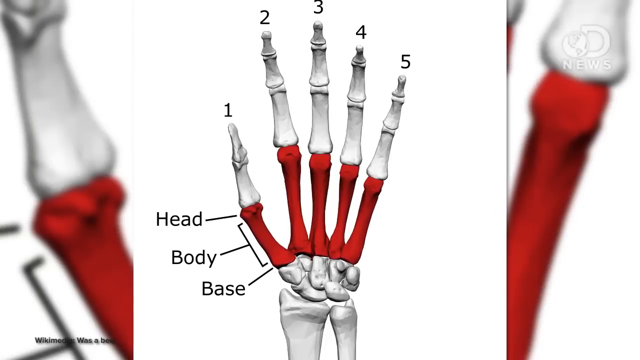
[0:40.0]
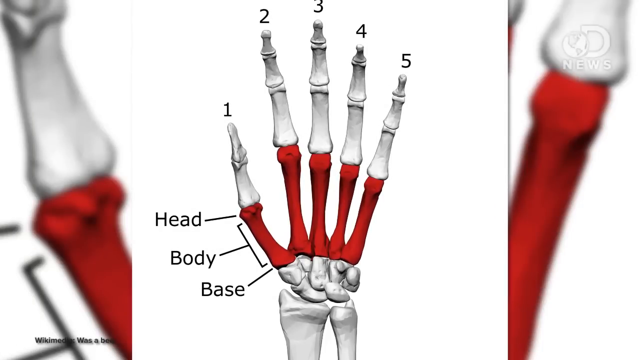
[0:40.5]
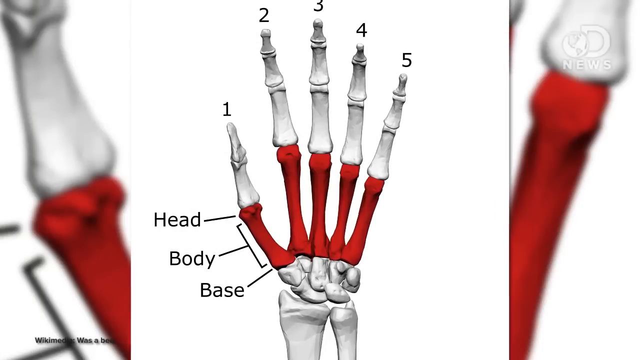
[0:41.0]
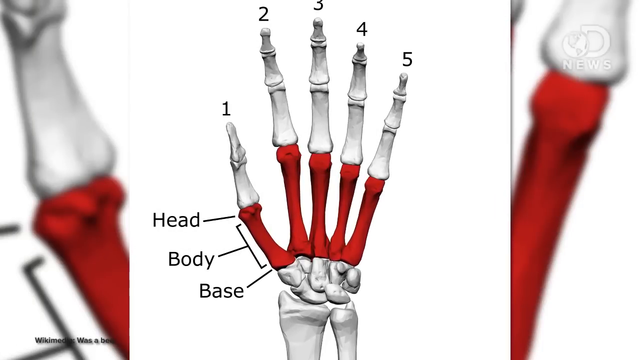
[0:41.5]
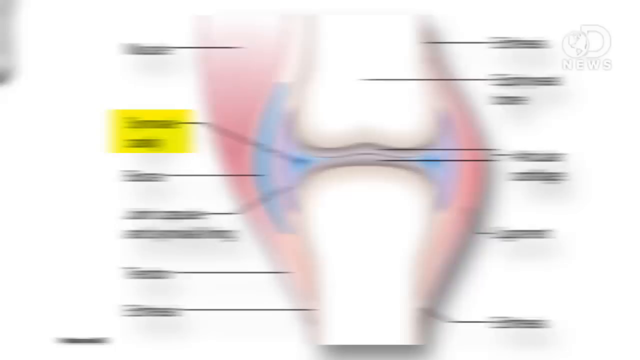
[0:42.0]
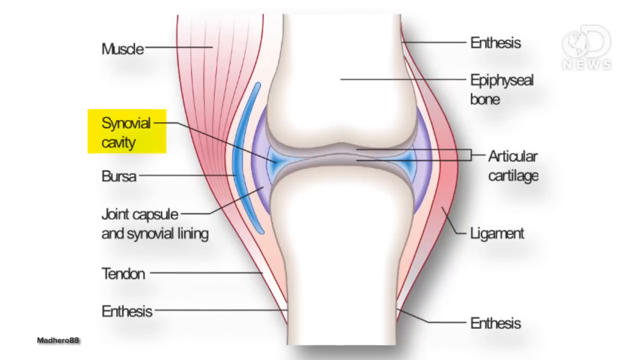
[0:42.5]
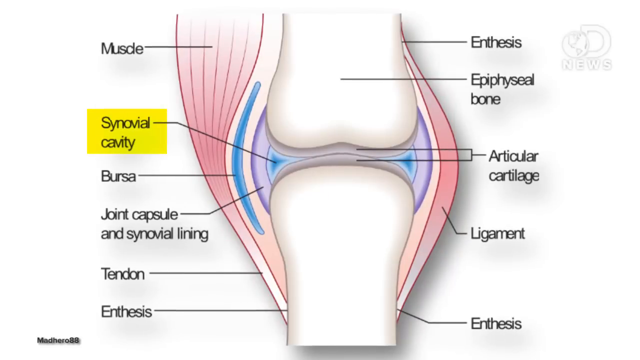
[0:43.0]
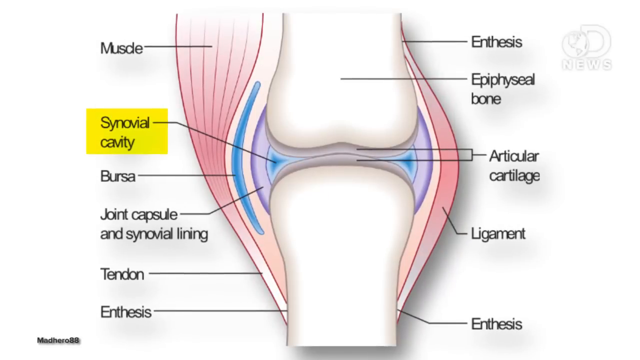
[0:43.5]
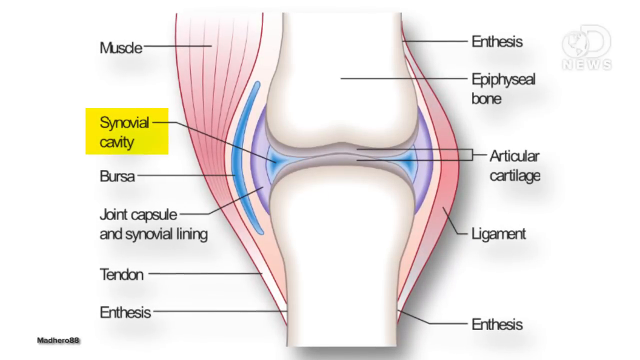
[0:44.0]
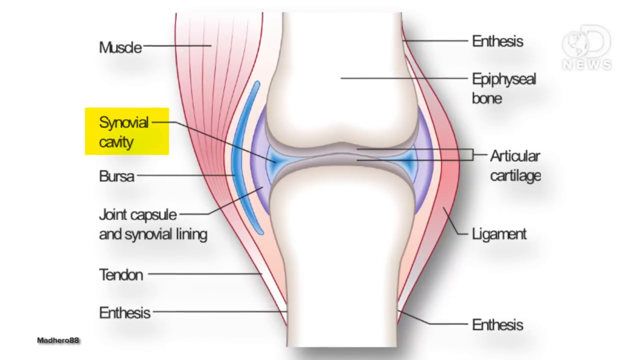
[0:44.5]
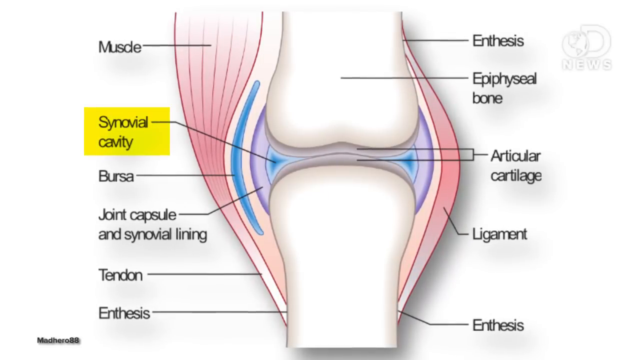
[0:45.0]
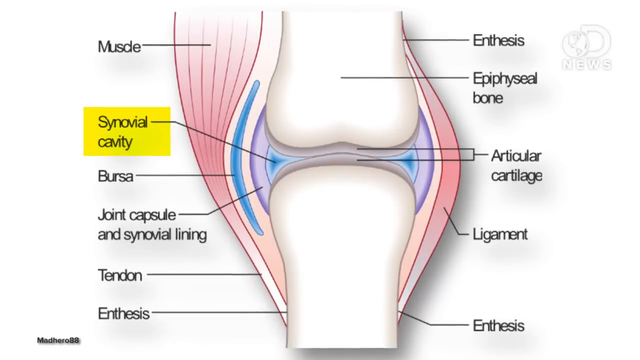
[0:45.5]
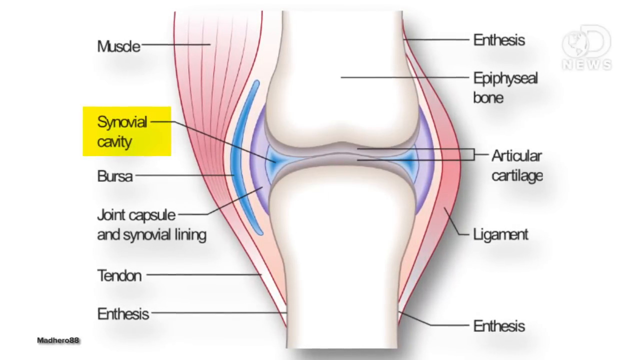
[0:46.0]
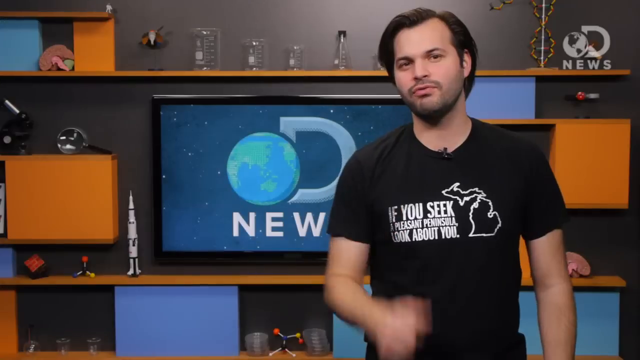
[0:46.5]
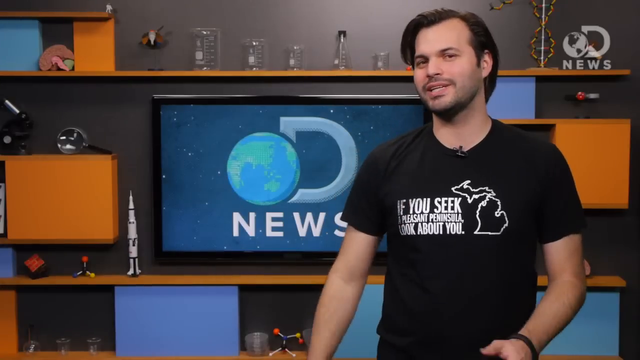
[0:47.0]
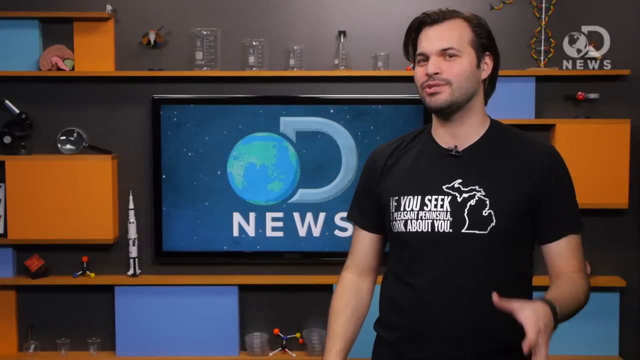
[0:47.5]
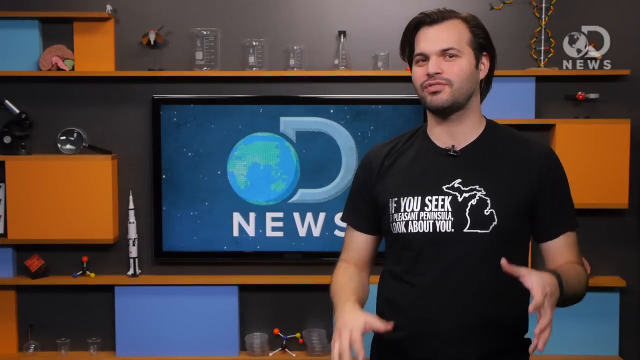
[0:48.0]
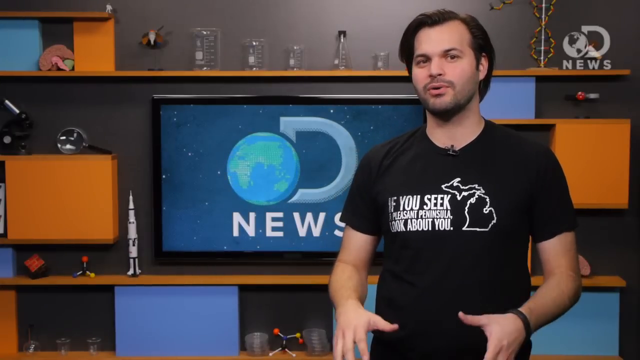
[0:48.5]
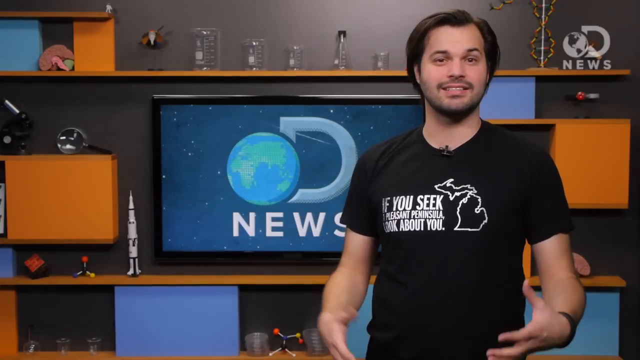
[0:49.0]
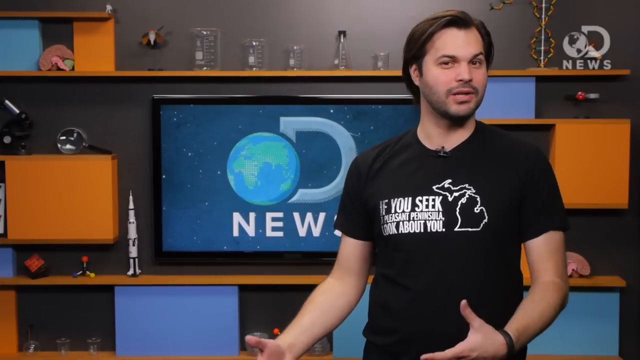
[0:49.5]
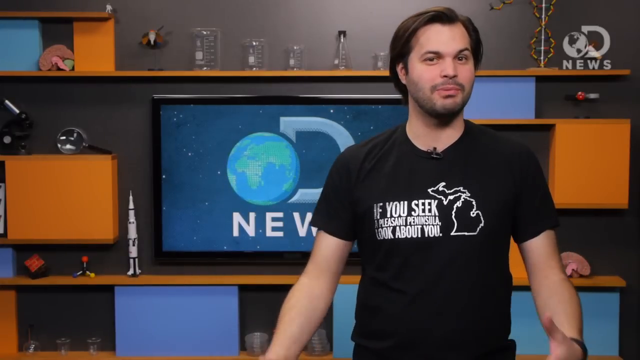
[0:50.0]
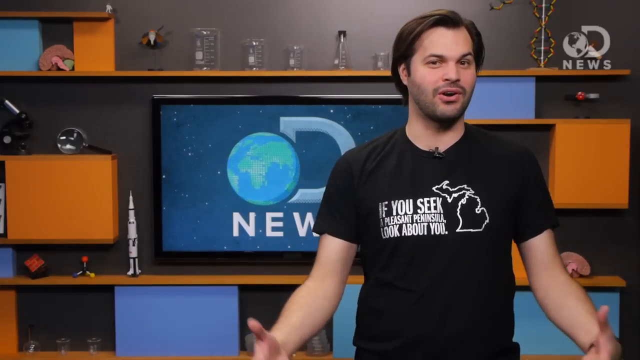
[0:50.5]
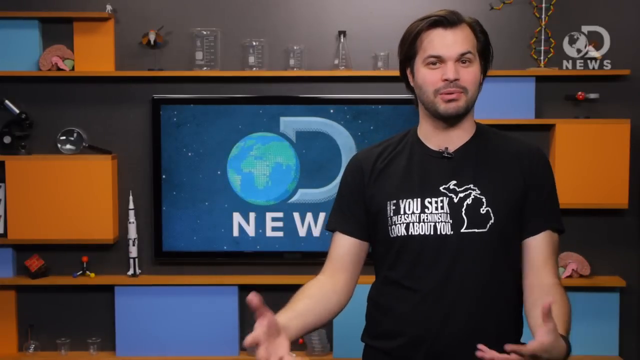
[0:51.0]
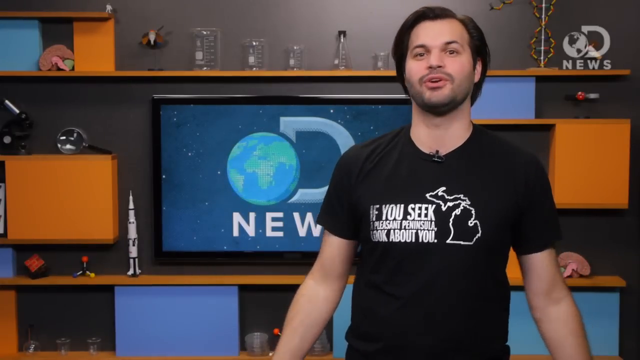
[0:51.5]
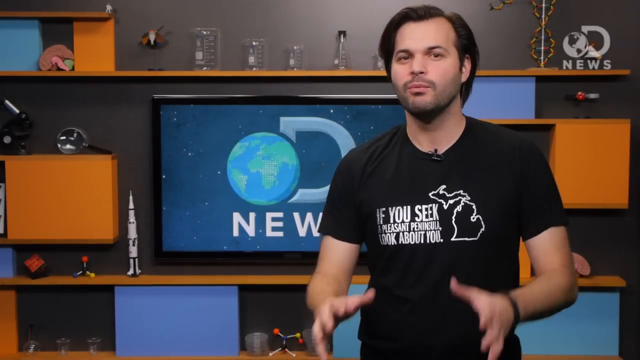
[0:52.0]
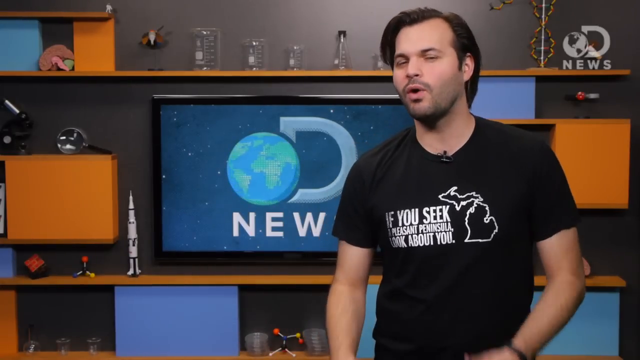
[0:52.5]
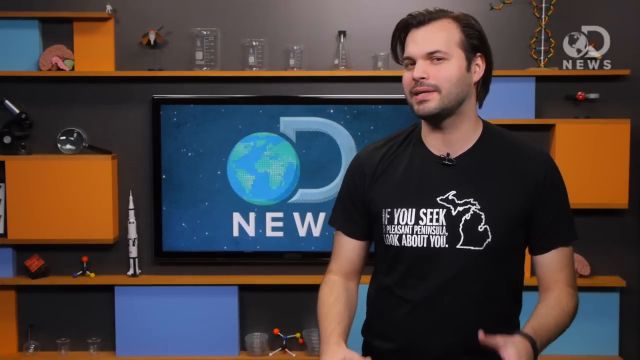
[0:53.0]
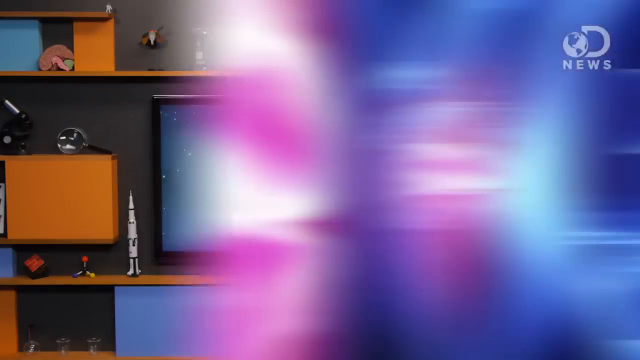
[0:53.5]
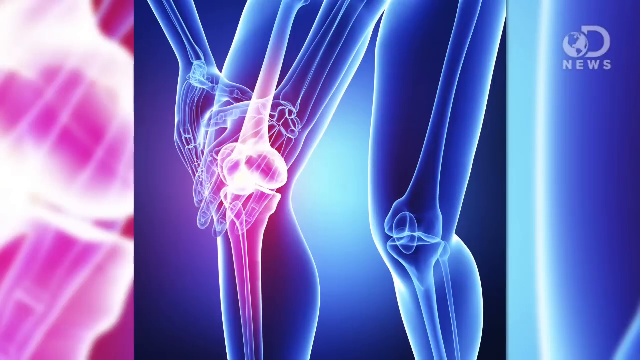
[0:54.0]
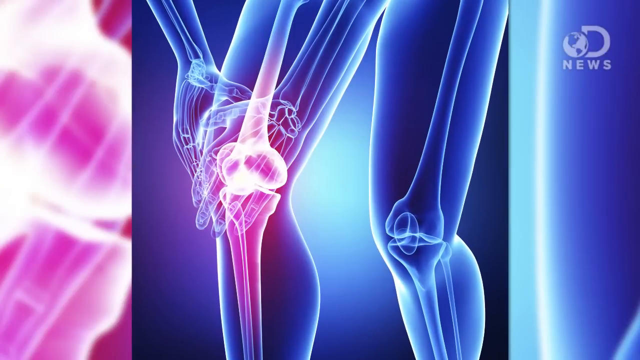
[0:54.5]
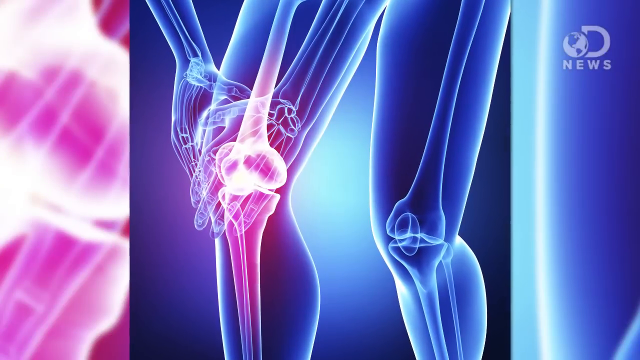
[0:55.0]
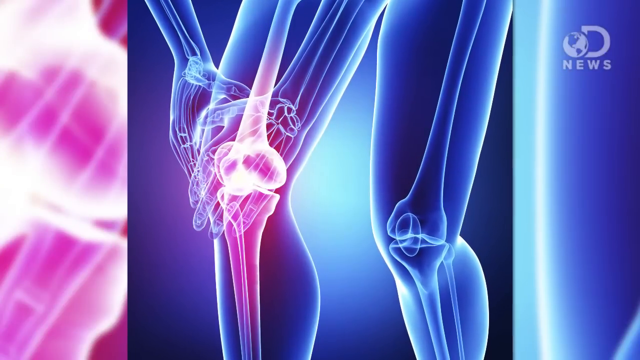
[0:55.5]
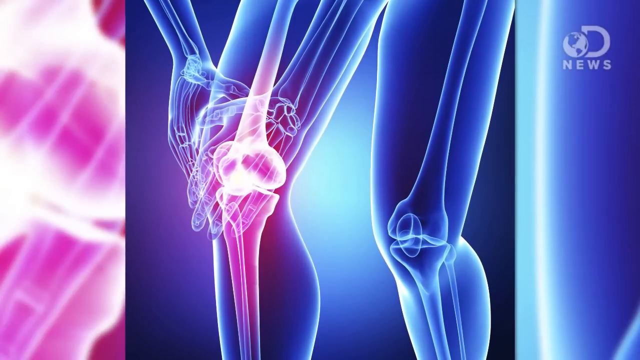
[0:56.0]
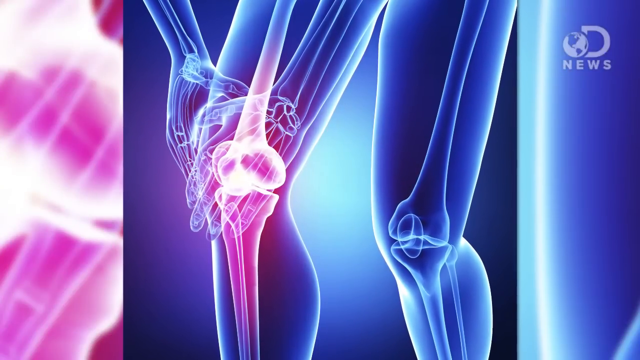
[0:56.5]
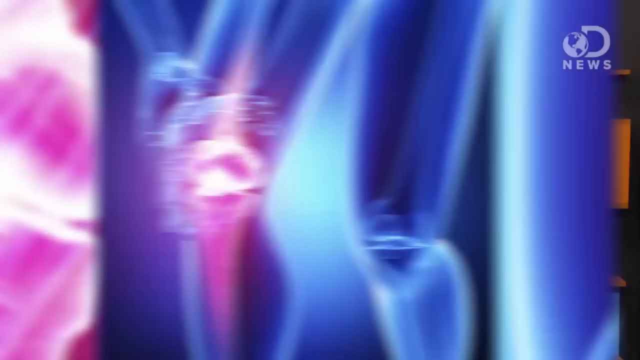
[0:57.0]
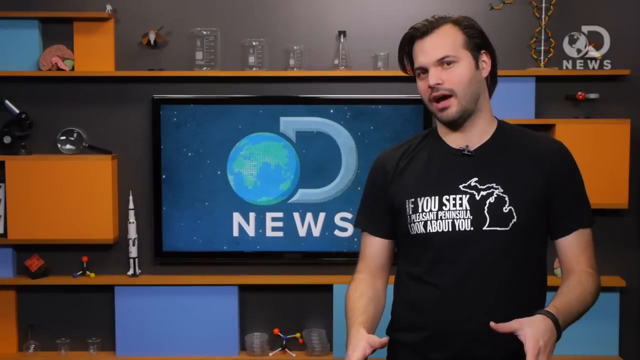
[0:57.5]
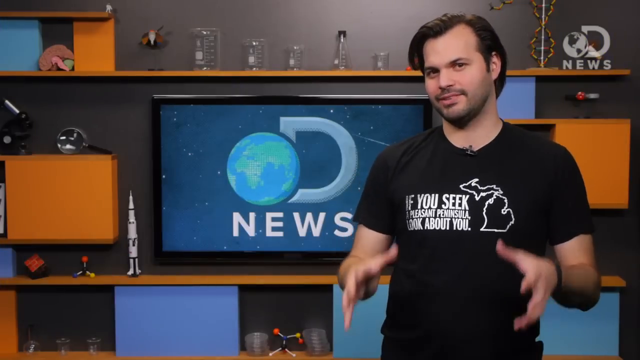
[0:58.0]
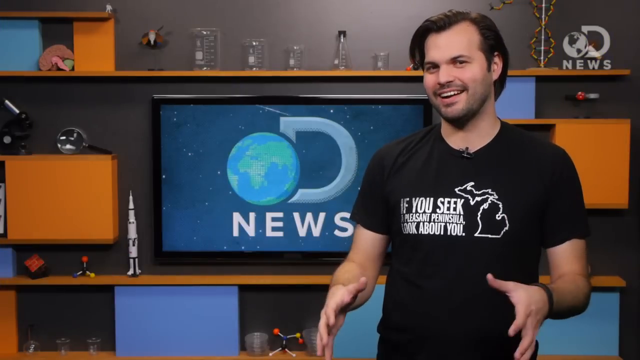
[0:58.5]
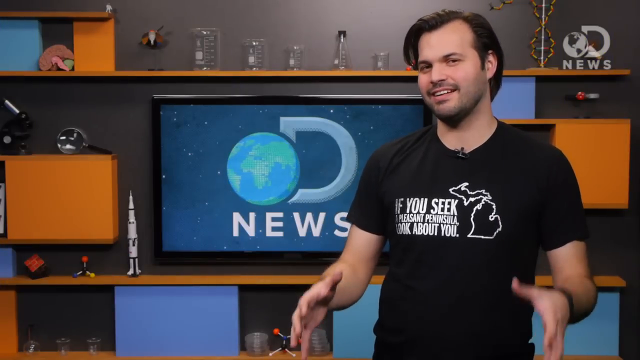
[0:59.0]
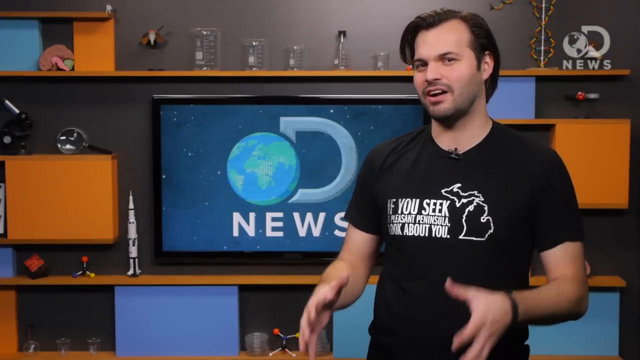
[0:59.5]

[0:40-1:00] In a TV studio, Trace, the anchor, transitions to a visual of an unidentified part of the body. Next is a visual of what appears to be a human knee in a leg, then an animation of what is apparently a human knee, followed by another illustration of an unidentified part of the human body.